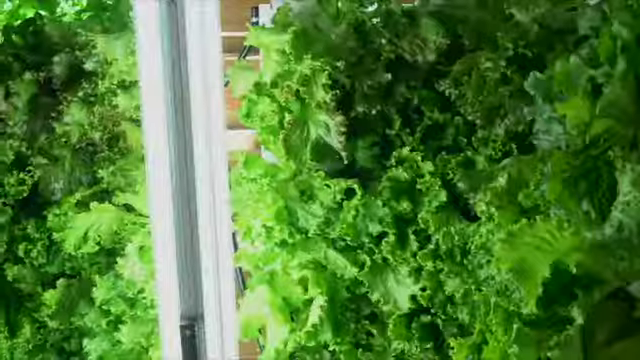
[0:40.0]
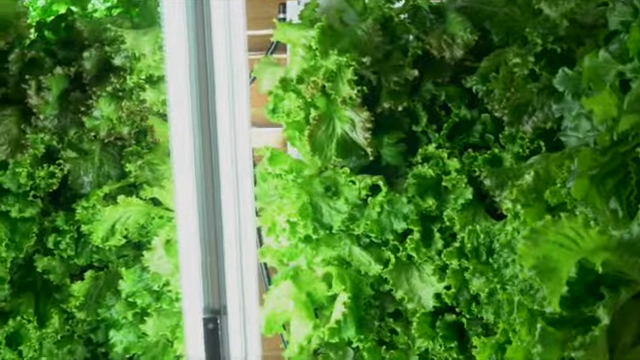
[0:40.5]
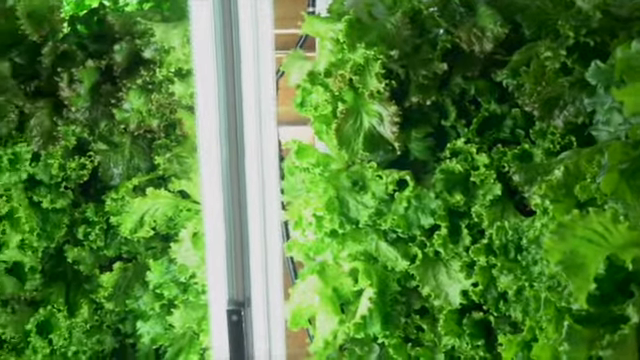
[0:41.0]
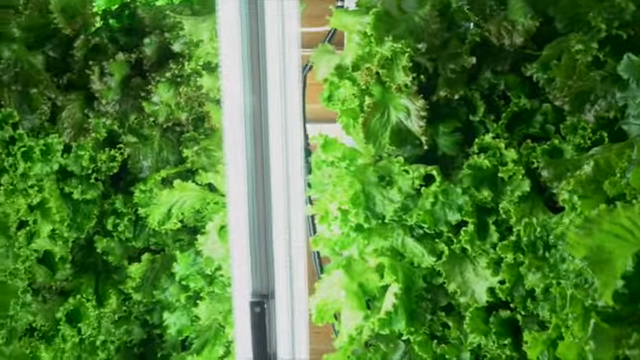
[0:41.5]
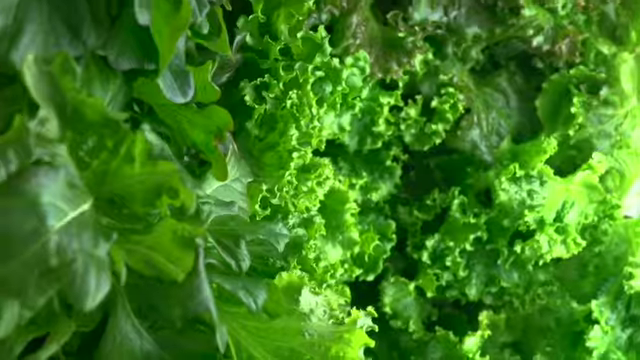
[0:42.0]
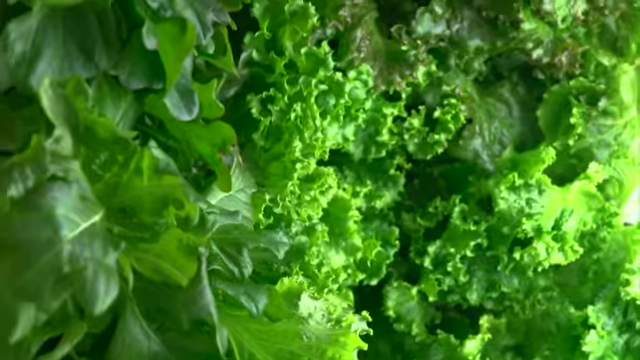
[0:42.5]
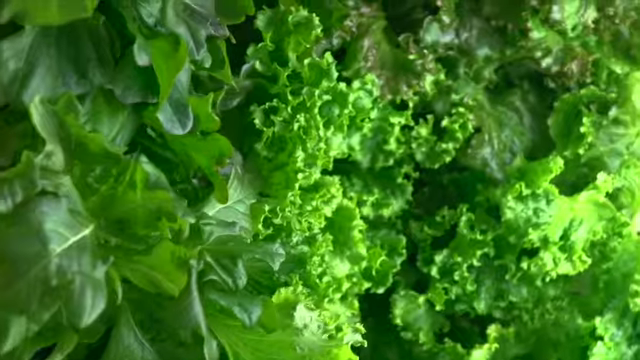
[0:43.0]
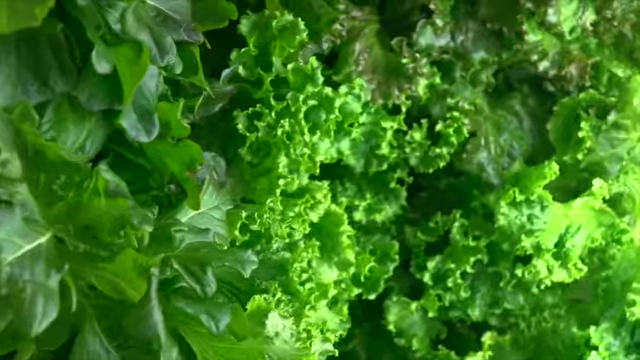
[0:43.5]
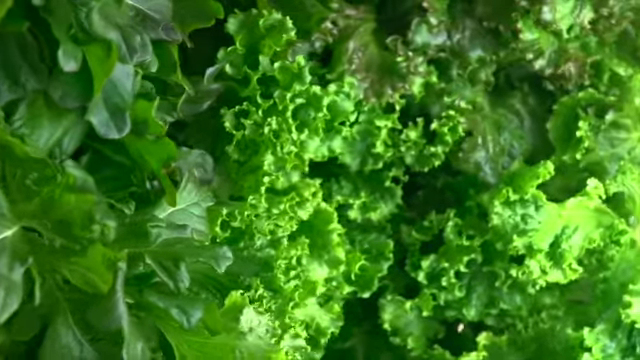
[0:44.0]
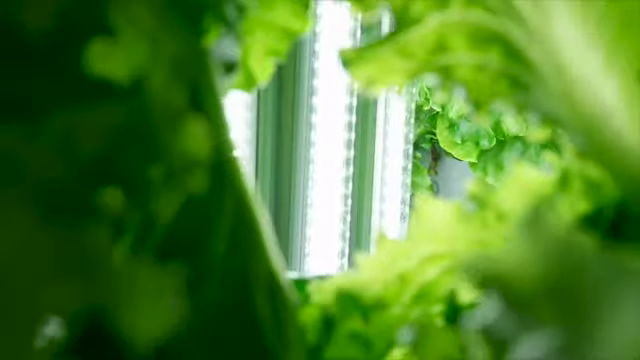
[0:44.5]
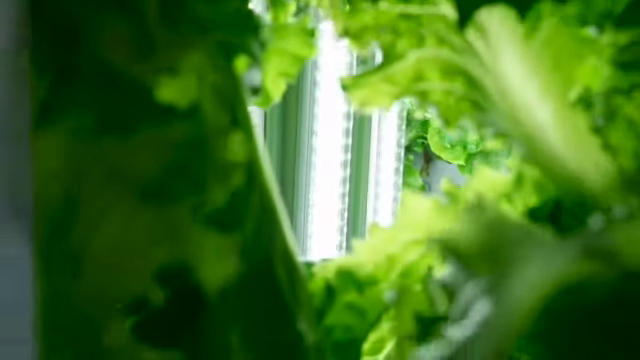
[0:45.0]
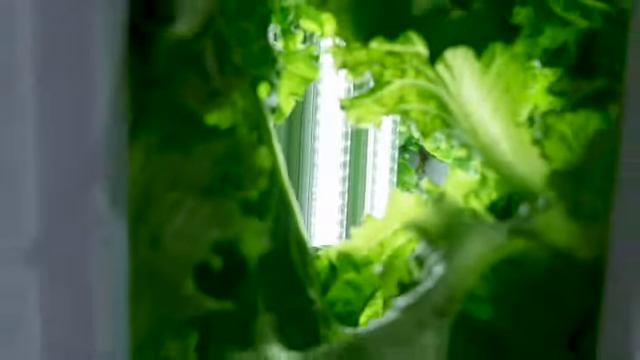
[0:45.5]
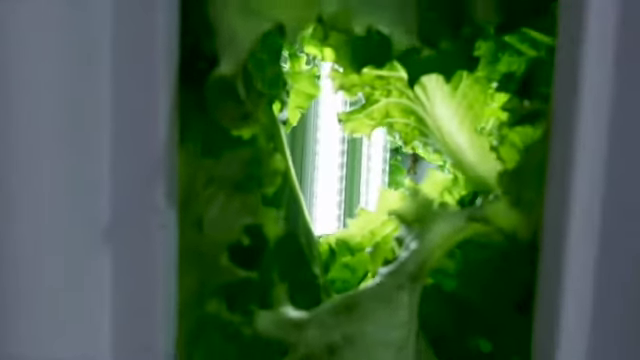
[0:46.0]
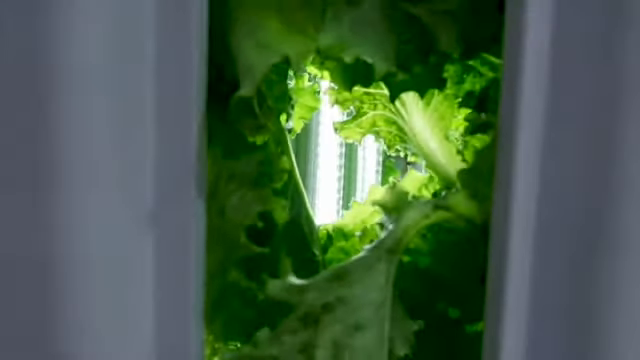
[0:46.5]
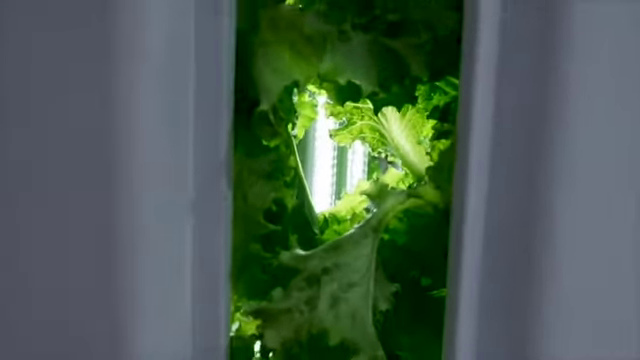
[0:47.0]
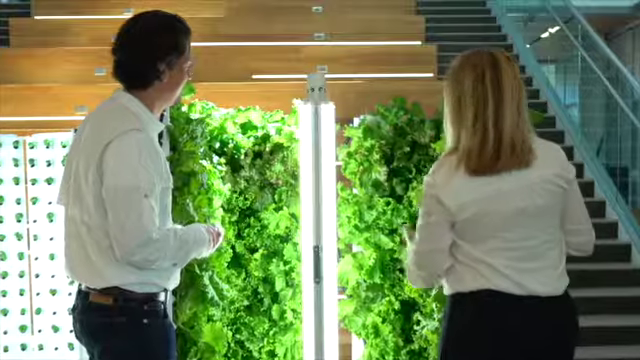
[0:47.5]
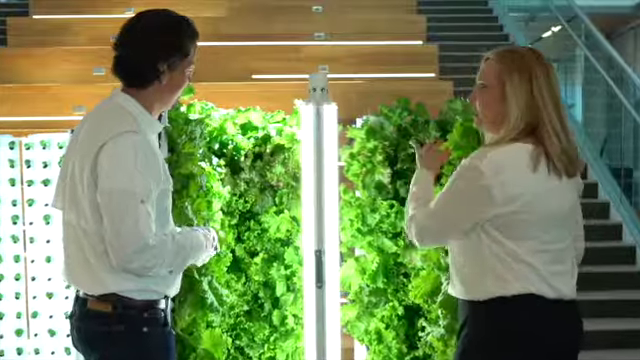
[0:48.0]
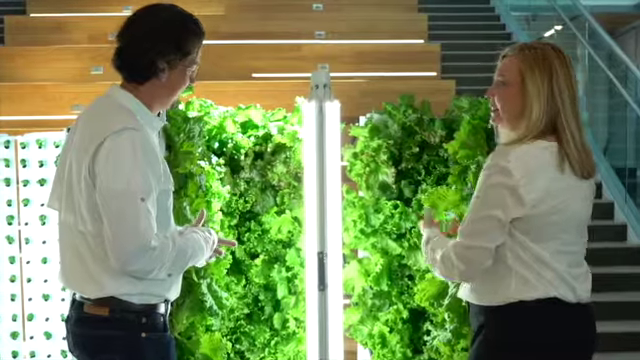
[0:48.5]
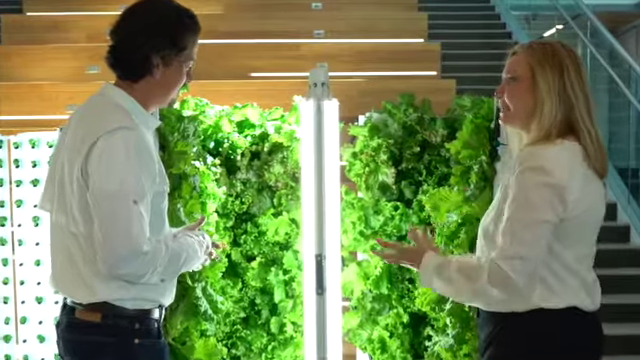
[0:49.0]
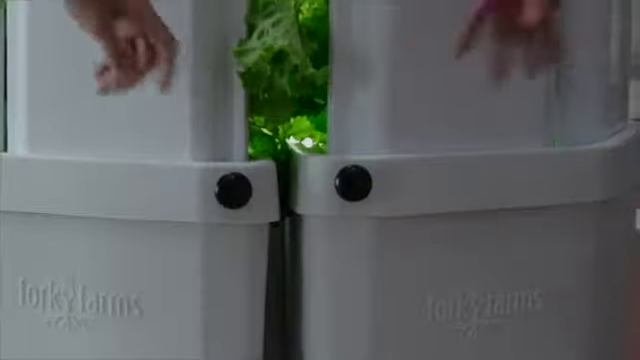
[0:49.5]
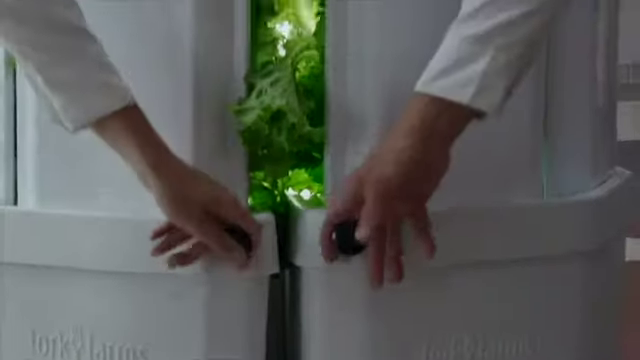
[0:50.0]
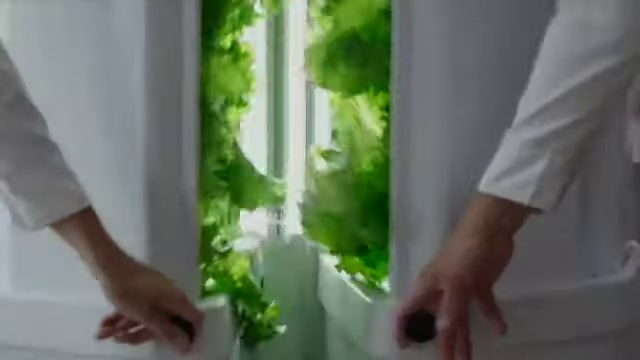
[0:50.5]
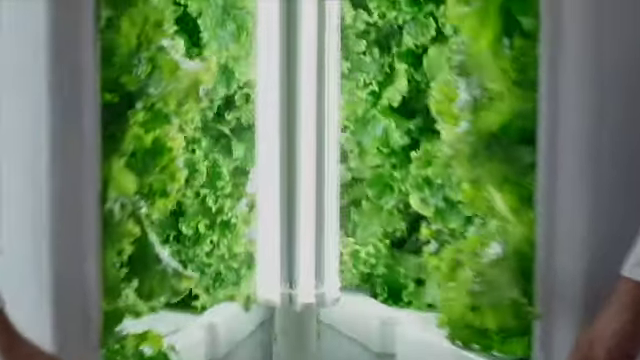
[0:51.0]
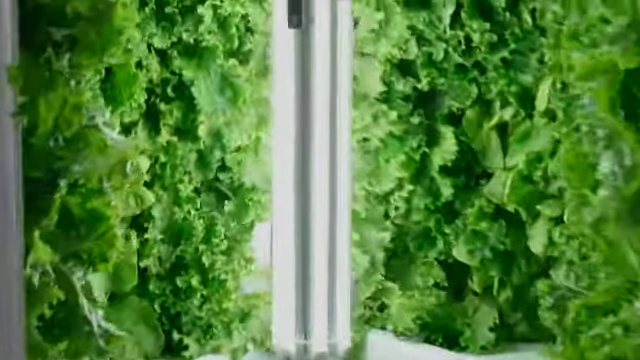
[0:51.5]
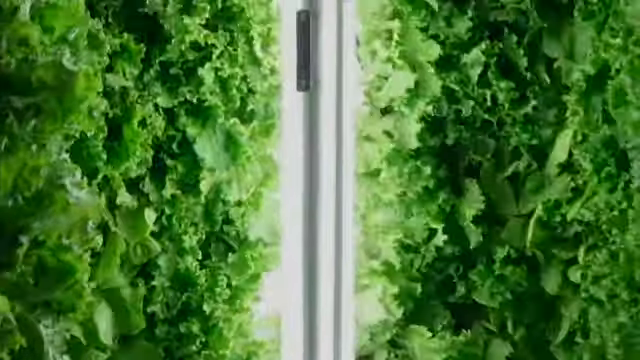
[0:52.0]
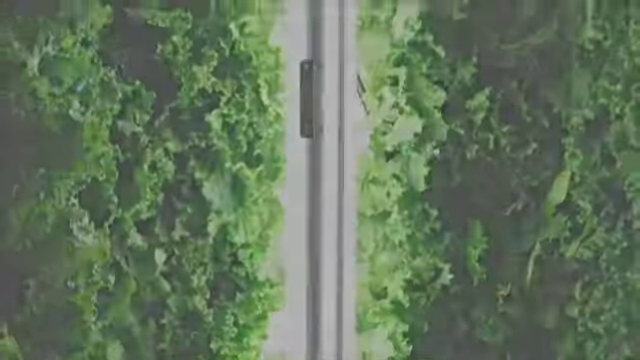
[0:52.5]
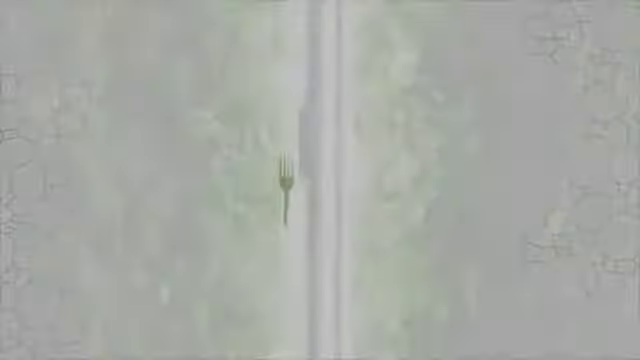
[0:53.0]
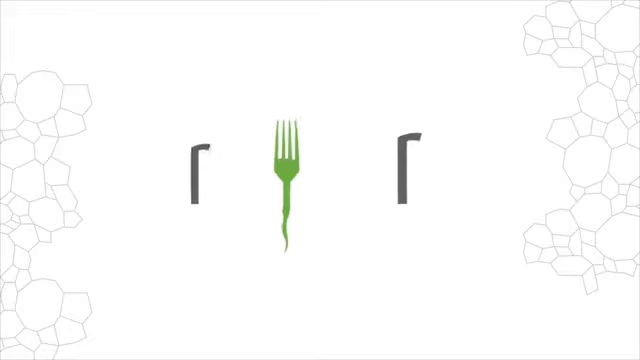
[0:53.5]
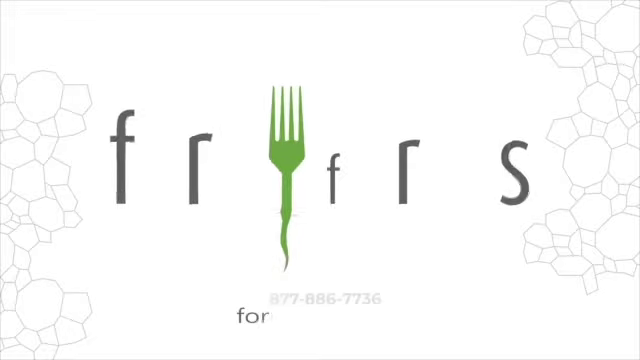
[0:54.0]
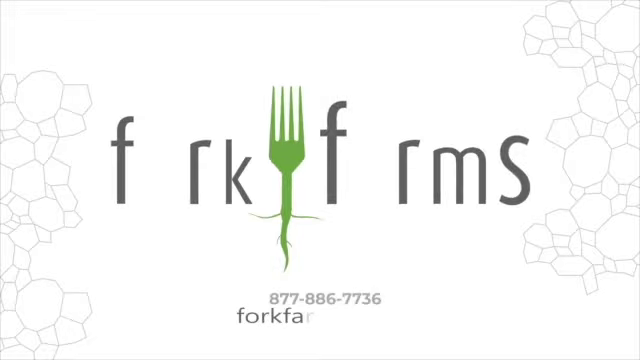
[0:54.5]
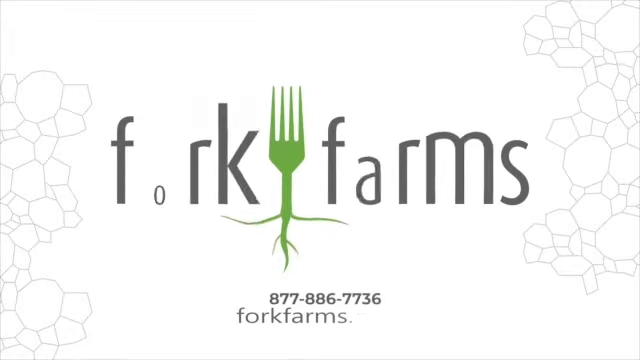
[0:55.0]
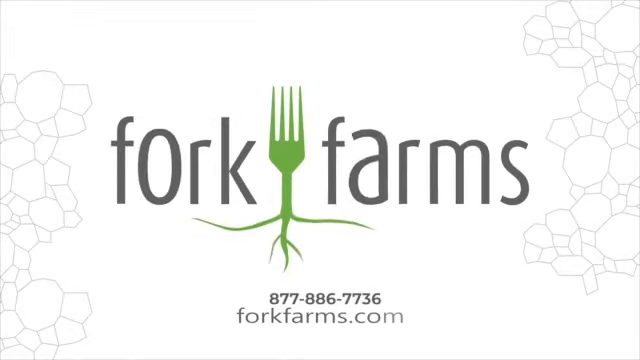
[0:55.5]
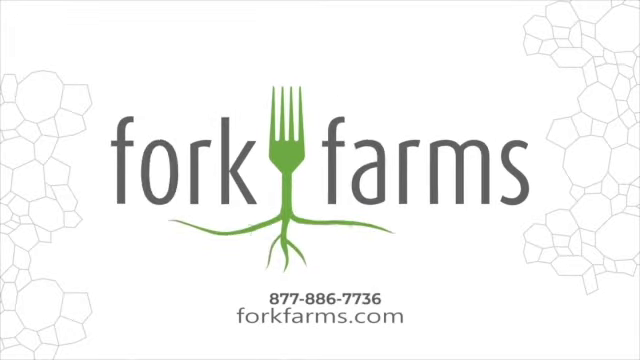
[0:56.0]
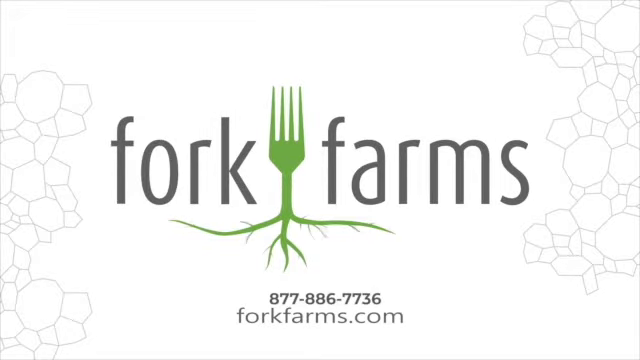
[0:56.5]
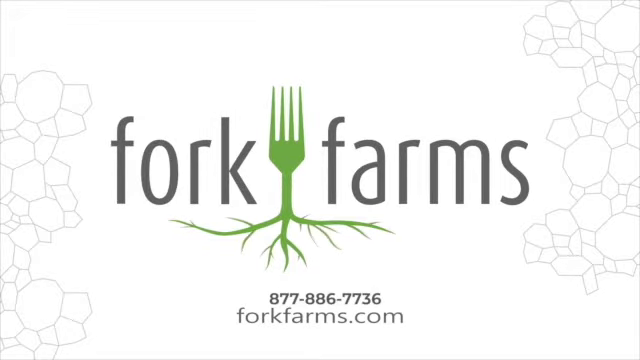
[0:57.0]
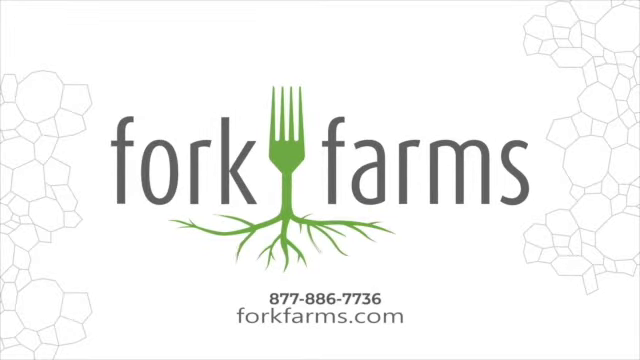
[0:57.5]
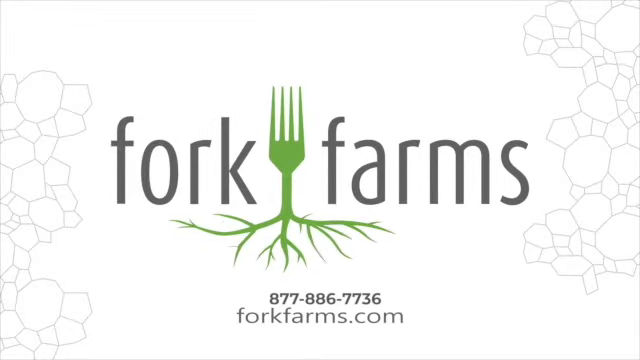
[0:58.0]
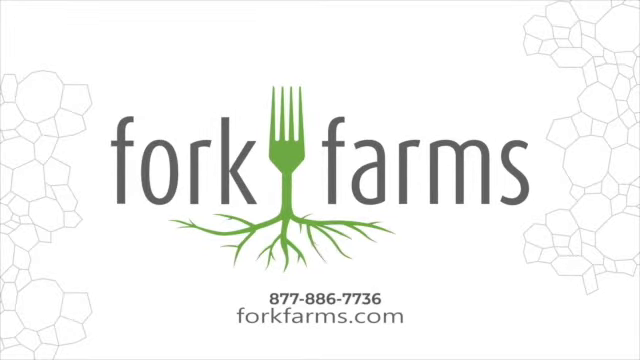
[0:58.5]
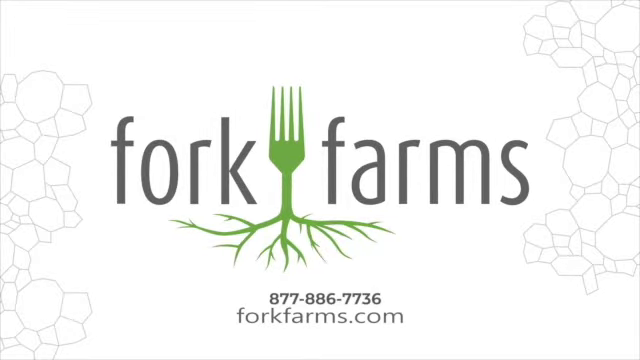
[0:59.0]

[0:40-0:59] The green leafy objects growing out of the white objects continue to appear; they look to be some sort of vegetable. Two people stand in front of one of these objects, talking with each other: the man with eyeglasses seen earlier, and next to him a woman with blonde hair who is also wearing a white long-sleeved shirt. One of the white compartments is then shown open, revealing more of the green leafy vegetable growing out of the white object. An animation of the logo "Fork Farms" follows, with a green fork between "Fork" and "Farms" that has a root at the bottom. Underneath is the phone number "877-886-7736", and underneath that the website "forkfarms.com". The background of the screen is white.